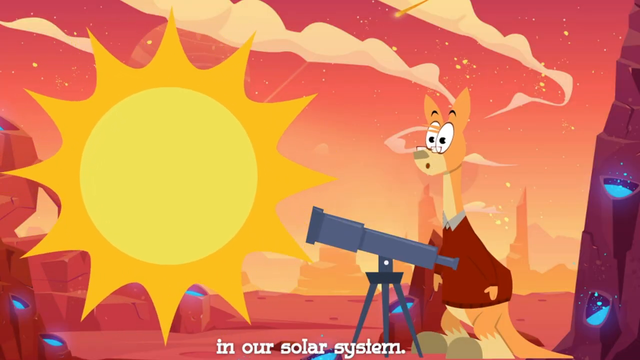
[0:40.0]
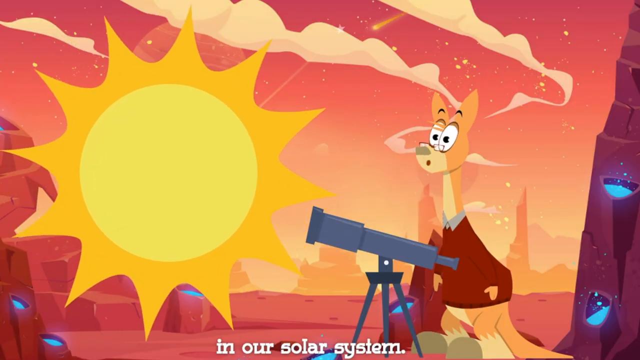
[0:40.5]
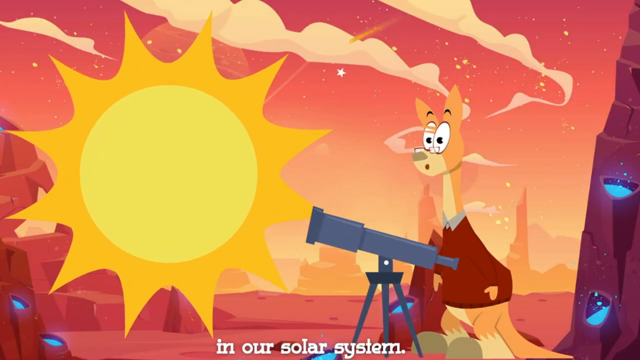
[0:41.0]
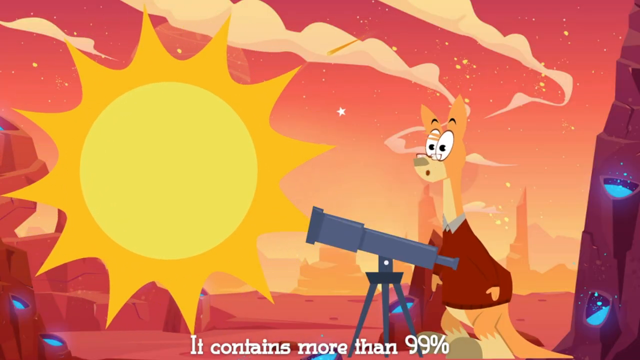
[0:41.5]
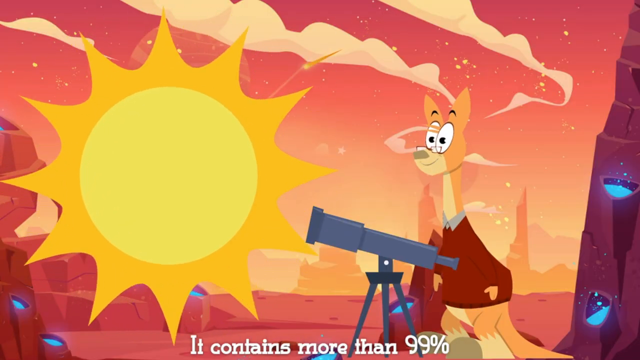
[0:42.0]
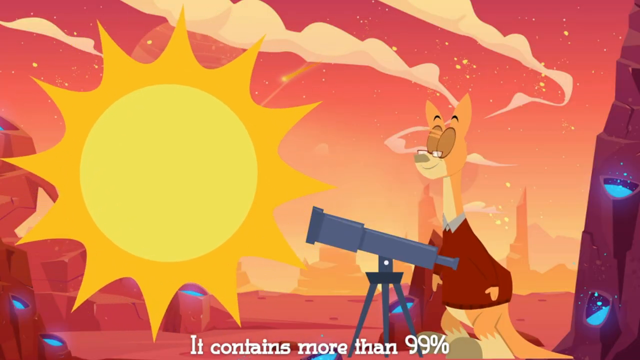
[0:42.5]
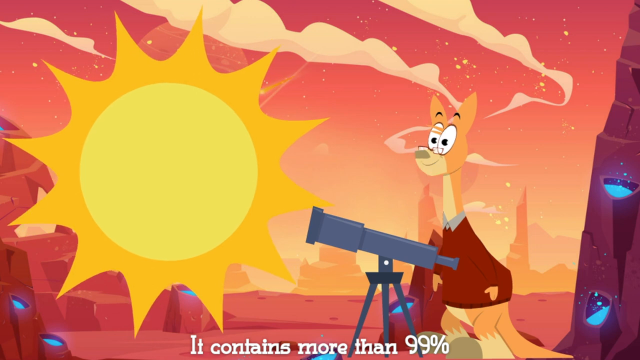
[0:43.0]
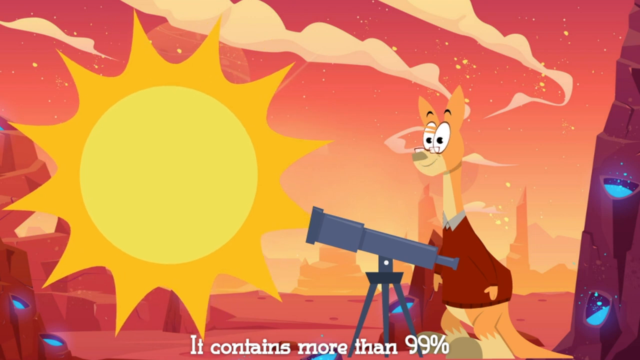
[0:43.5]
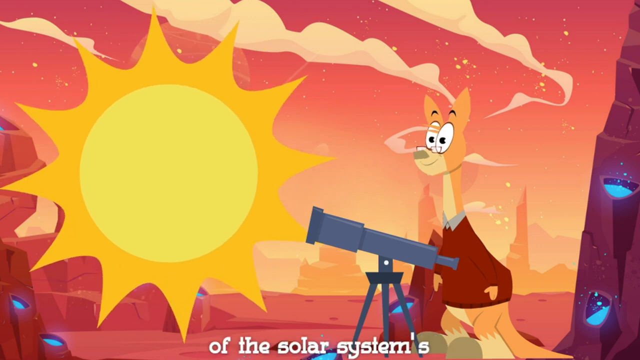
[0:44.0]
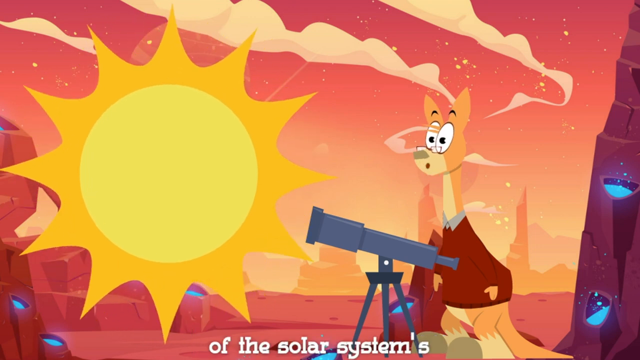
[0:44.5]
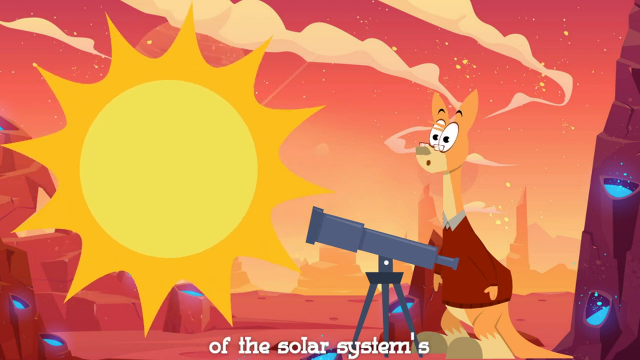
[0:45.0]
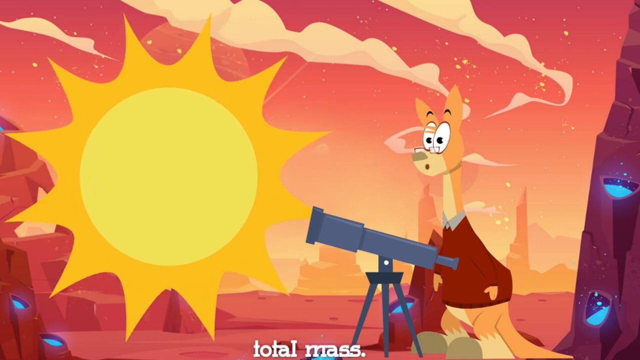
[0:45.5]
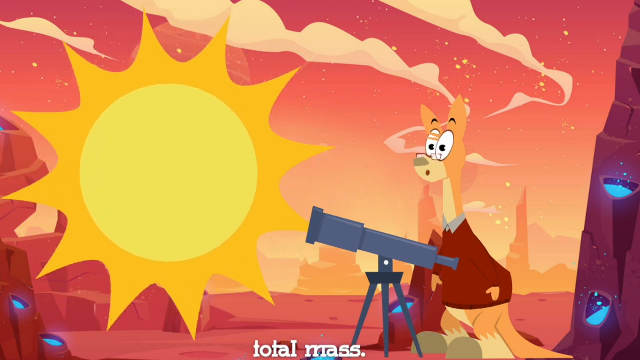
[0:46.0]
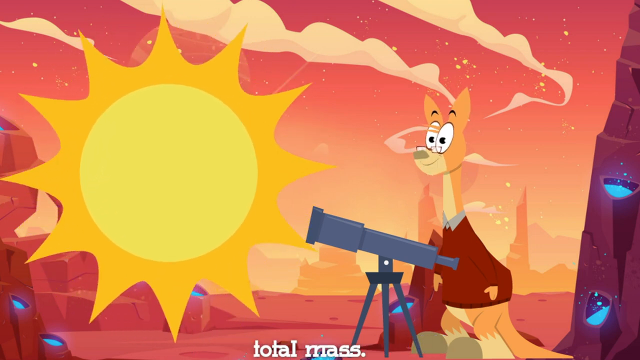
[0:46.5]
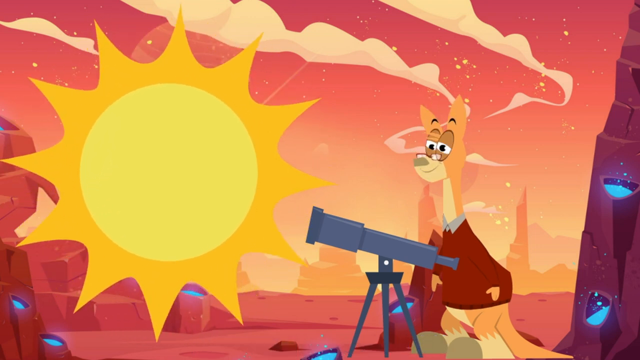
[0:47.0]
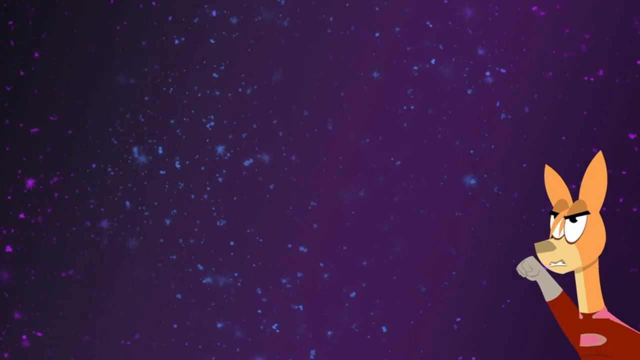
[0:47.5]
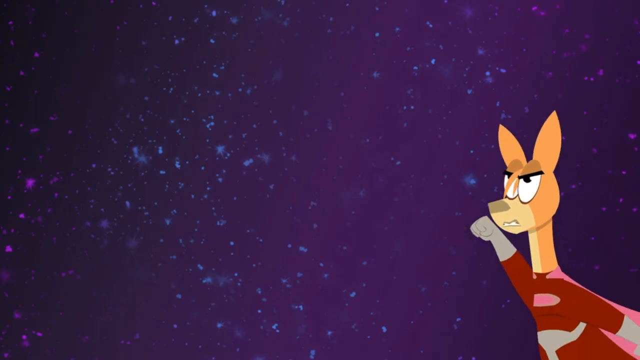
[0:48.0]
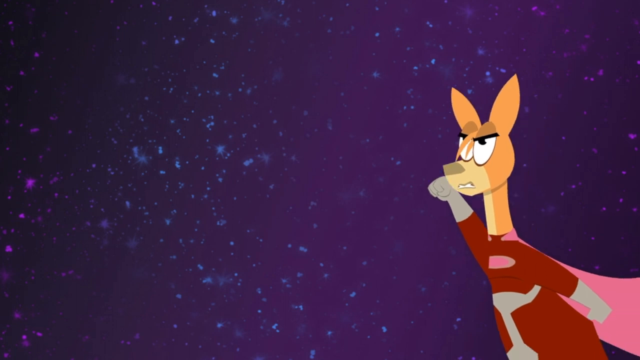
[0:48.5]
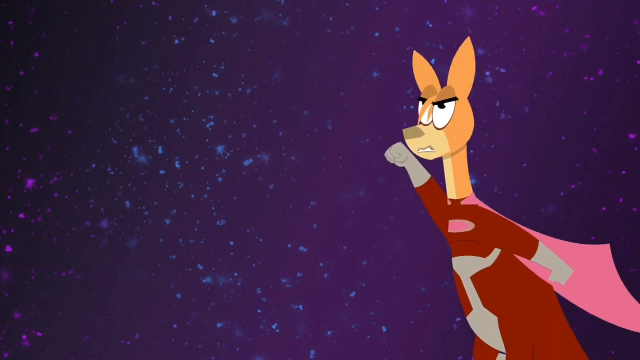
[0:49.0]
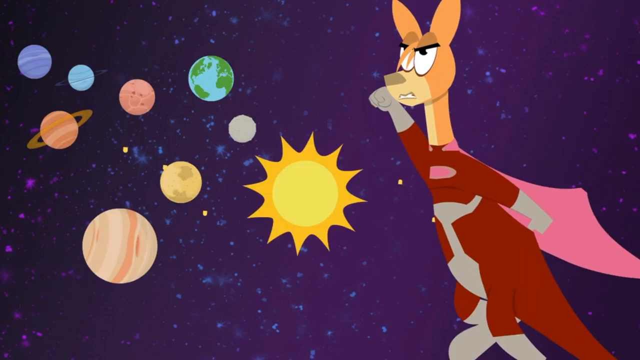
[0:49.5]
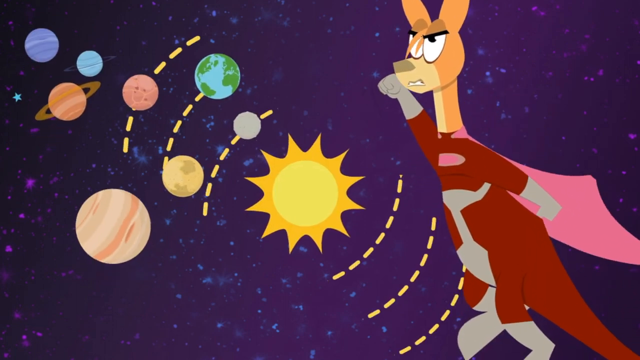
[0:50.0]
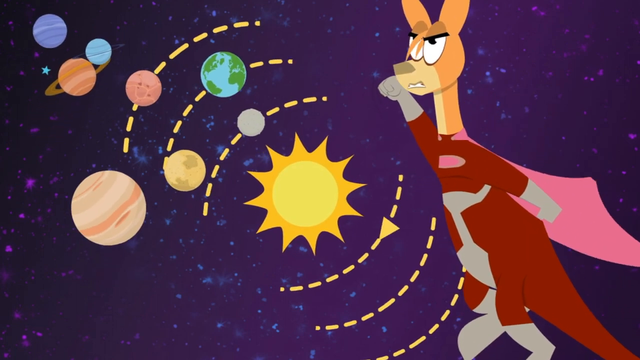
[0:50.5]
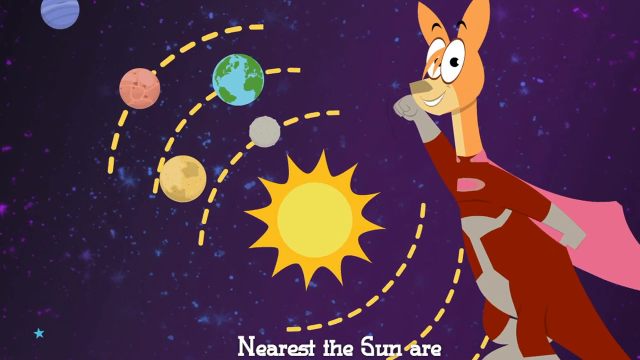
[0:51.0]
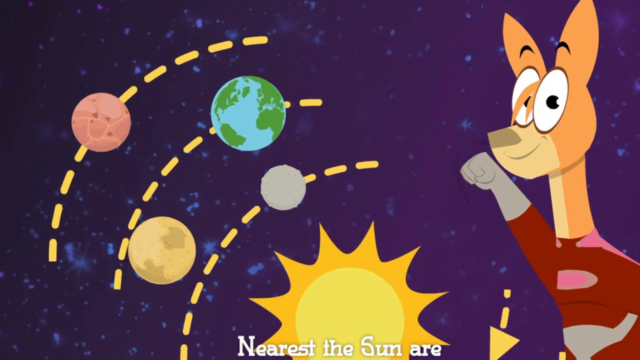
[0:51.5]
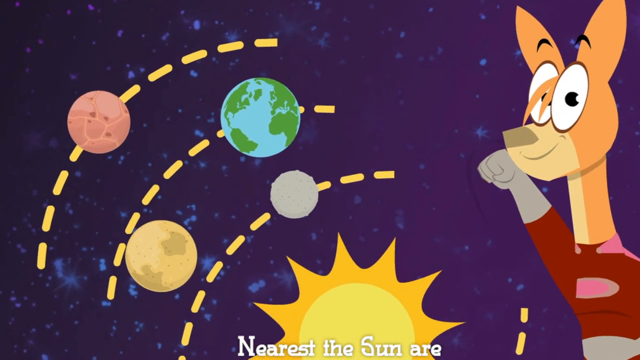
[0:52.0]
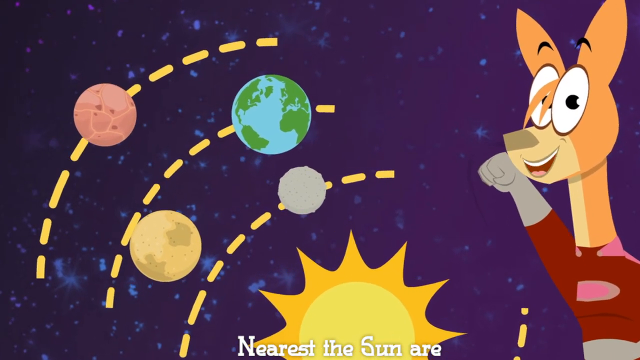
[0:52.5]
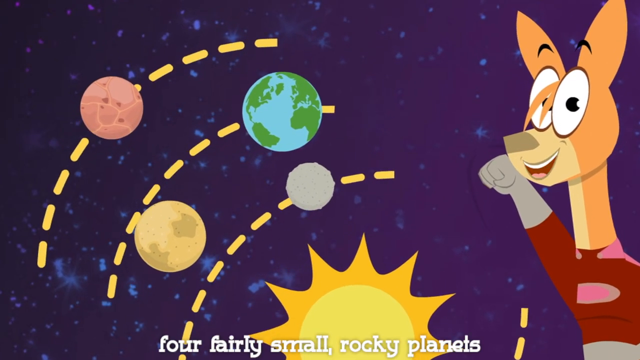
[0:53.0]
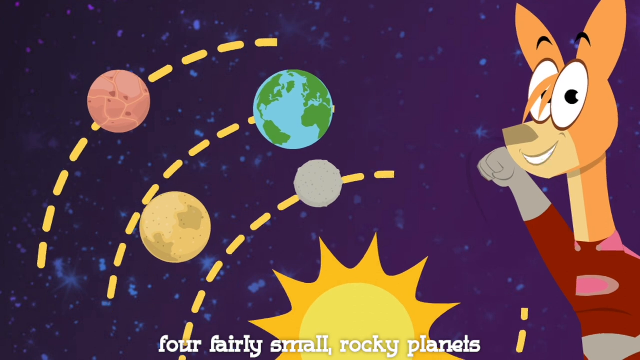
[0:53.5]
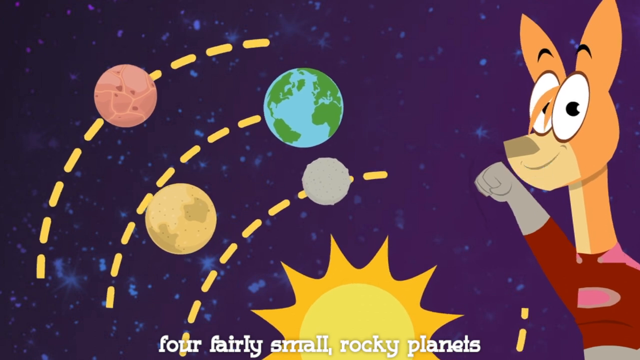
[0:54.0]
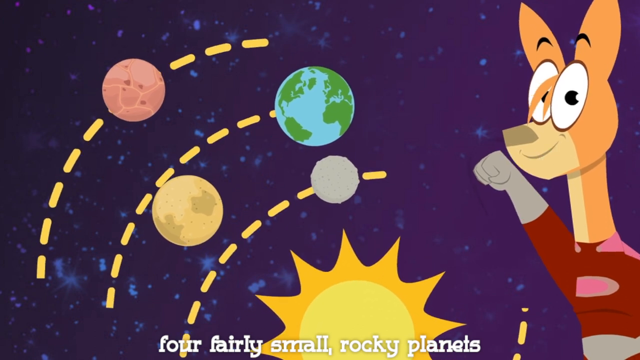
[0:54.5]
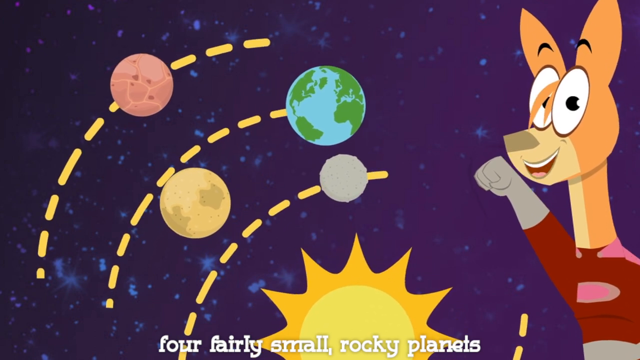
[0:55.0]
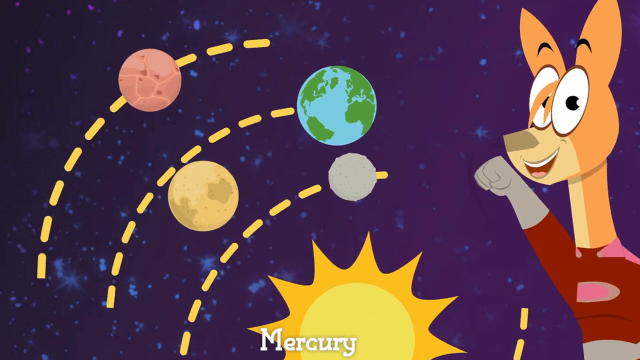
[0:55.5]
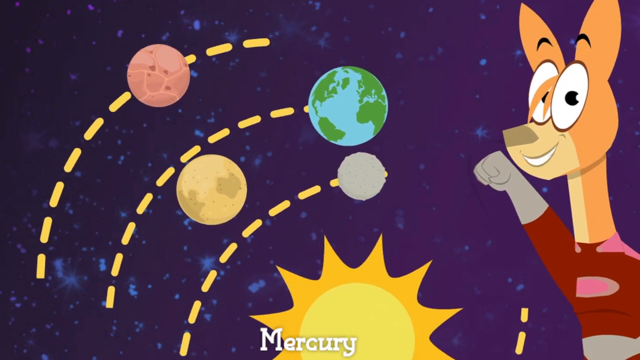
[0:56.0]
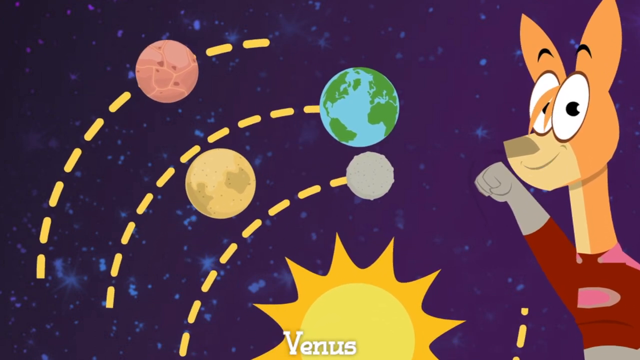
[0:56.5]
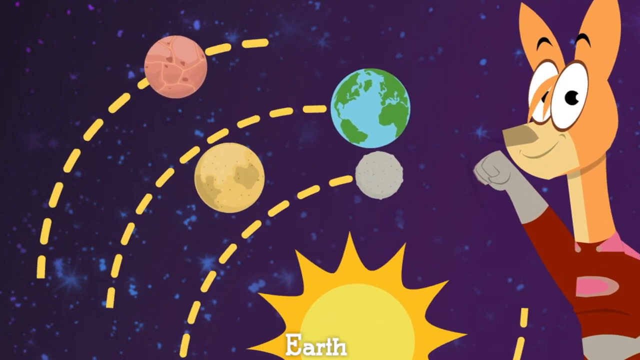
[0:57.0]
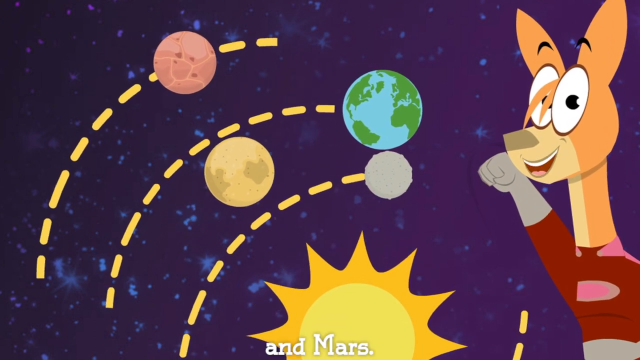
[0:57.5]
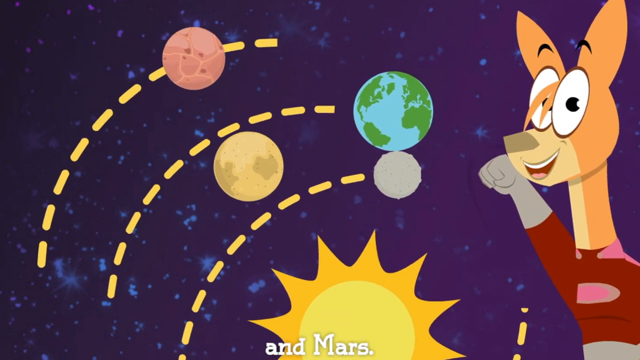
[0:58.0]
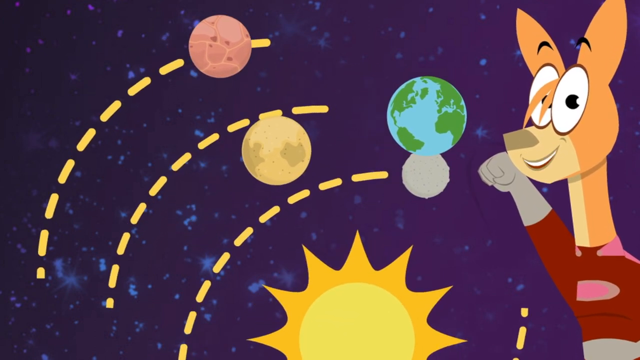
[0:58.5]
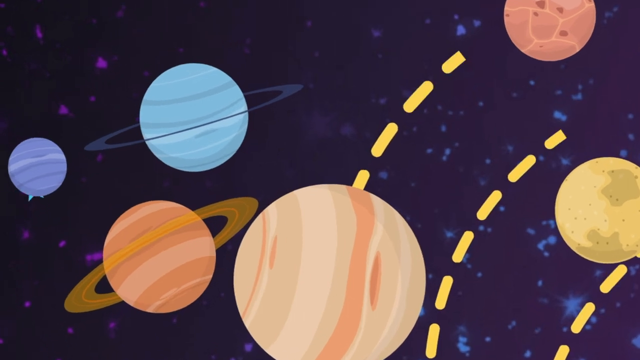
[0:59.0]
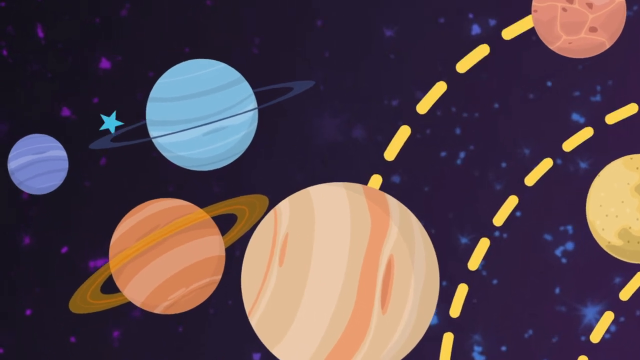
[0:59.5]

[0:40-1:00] The scene cuts to a pink and orange gradient background peppered with numerous white dots, with shooting comets and falling debris. In the front, on the left side of the screen, a large yellow sun rotates 360 degrees in front of the deer. The deer is on the right side of the screen, looking toward the yellow circle and using a gray microscope situated in front of him on a tripod. The scene then cuts to outer space with no sun, where the deer is back in his cape and space suit. He flies with his fist in front of his face, looking determined to reach a destination. The sun with its orbiting planets reappears in the background and begins rotating 180 degrees as the planets continue to orbit it. The view zooms in to the planets, then to the earth-like planet, as the deer looks at the camera and begins talking.